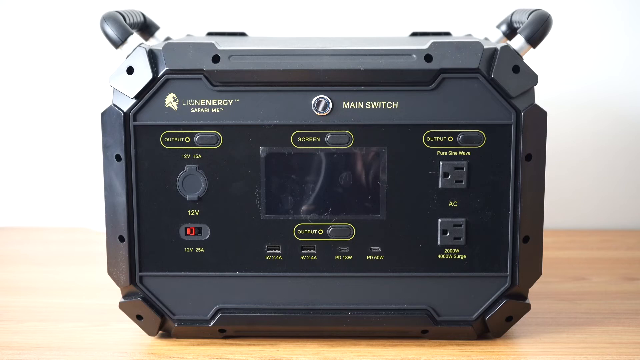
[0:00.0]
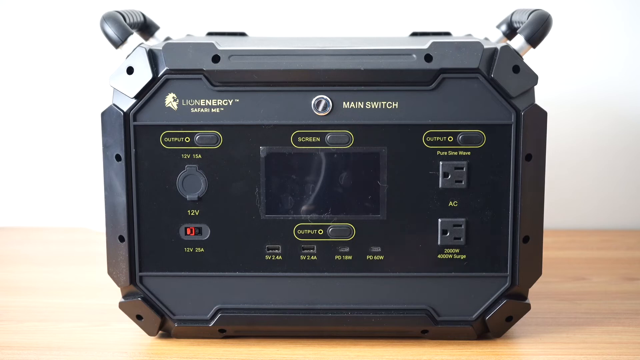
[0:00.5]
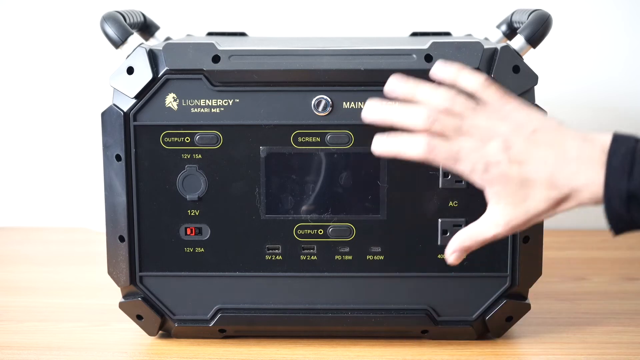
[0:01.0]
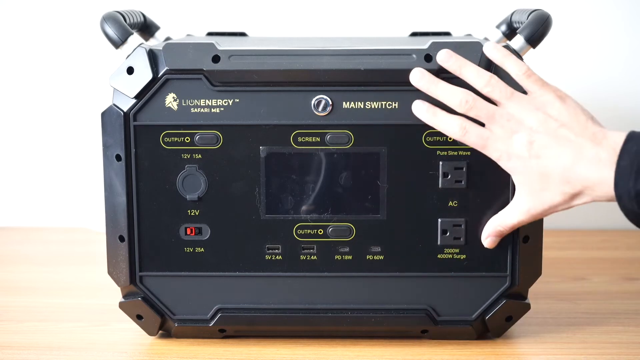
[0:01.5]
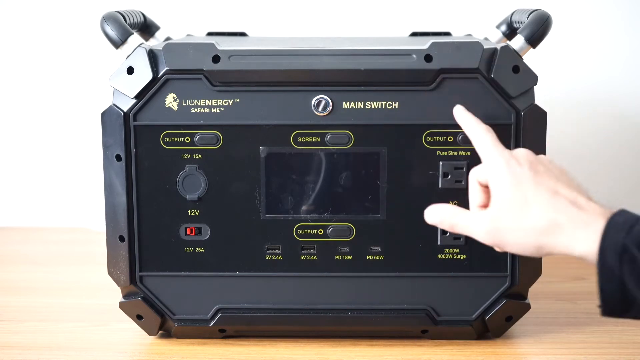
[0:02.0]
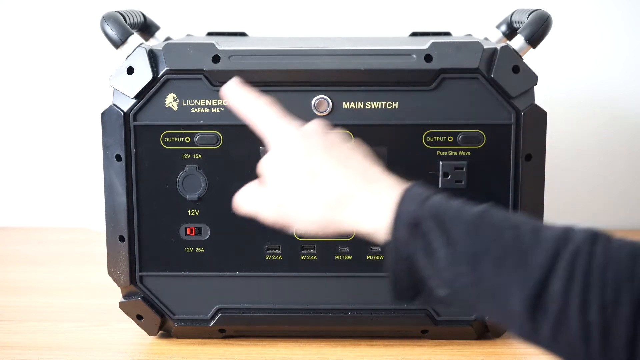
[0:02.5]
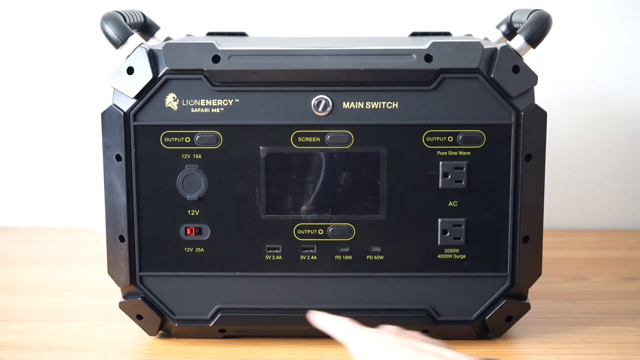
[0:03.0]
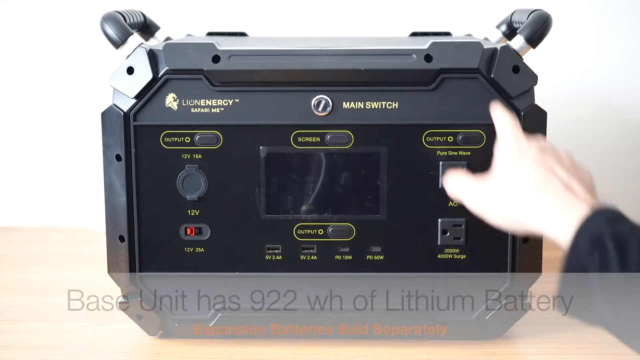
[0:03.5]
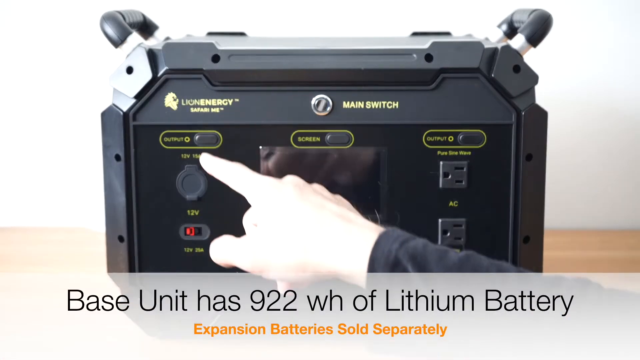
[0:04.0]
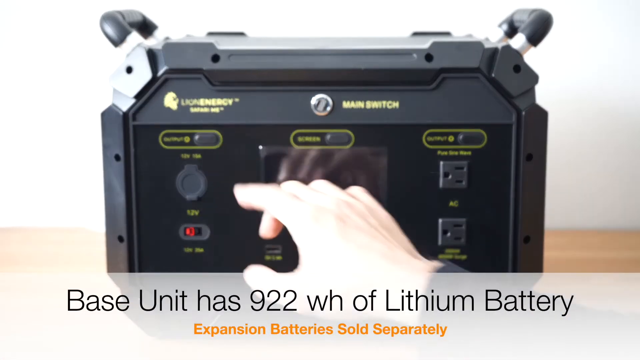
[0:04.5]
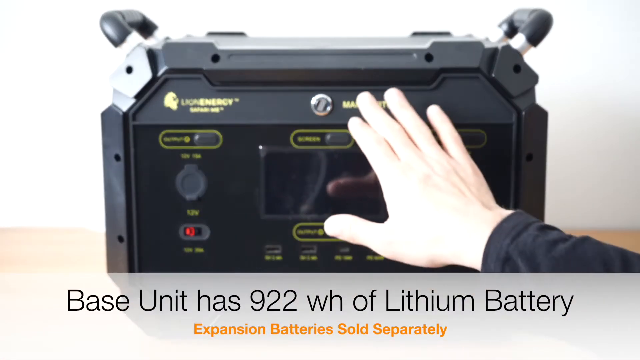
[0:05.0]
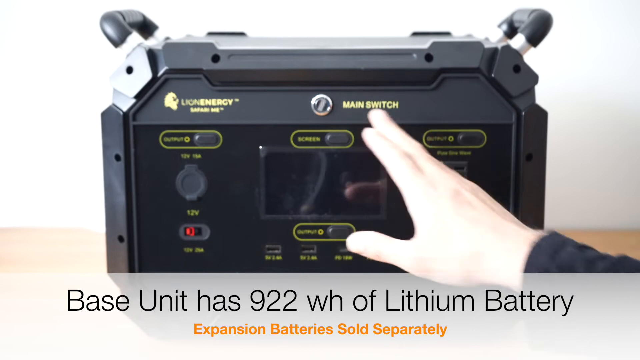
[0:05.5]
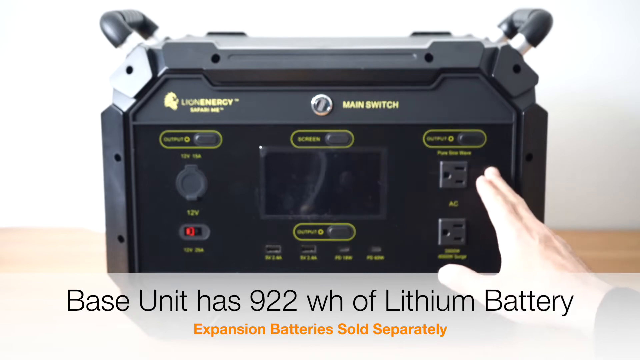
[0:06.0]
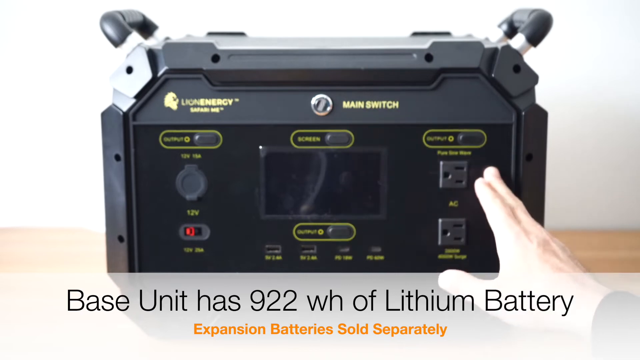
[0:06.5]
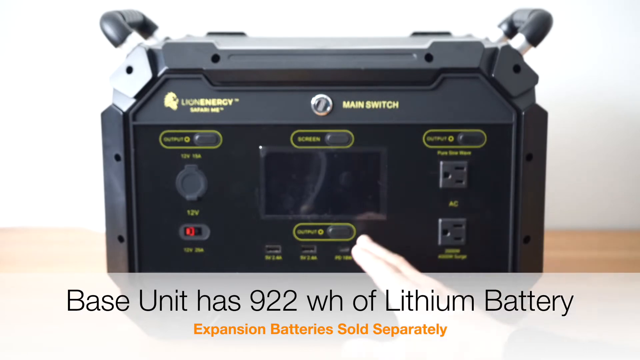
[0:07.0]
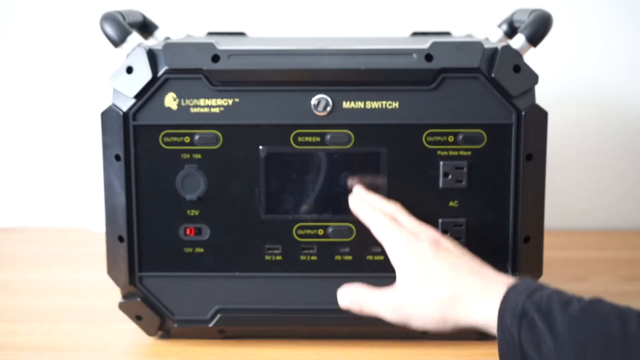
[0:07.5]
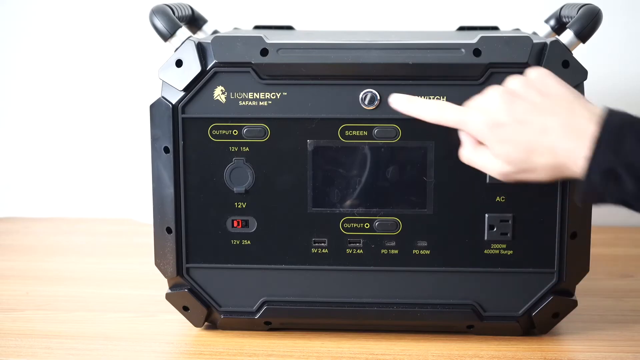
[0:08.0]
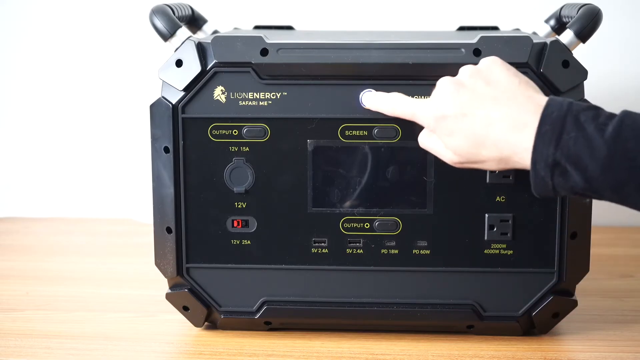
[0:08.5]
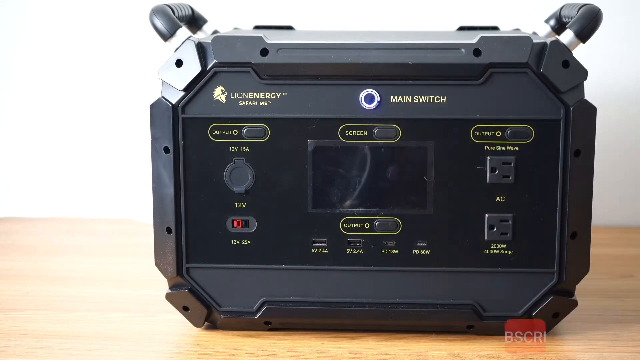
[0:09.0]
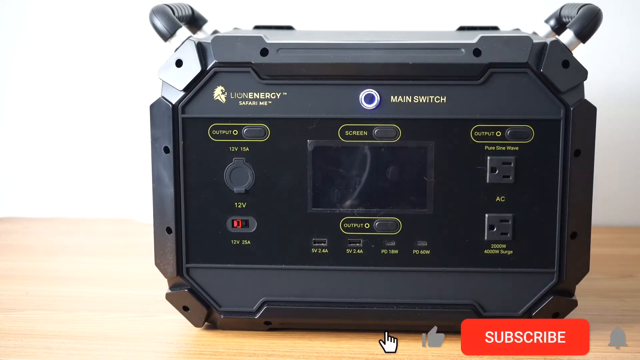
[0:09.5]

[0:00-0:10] What appears to be an electronic device is shown, with a lion logo and text that says "Lion Energy Safari Me." It has a main switch button, an output button on the top left, an output button on the top right, and an output button at the bottom center. There are some 12-volt slots, an AC area where it looks like something could be plugged in, and a 2000-watt, 4000 surge place for plugging something in. A person's hand comes onto the screen and moves a finger roughly in a circle around the machine. Text pops up that says "base unit has 922 WH of lithium battery. Expansion batteries sold separately." He seems to point toward the main switch, then toward the AC, then moves toward the output at the bottom, and then appears to put his finger in the hole where the main switch is. A YouTube subscribe button is at the bottom of the screen.